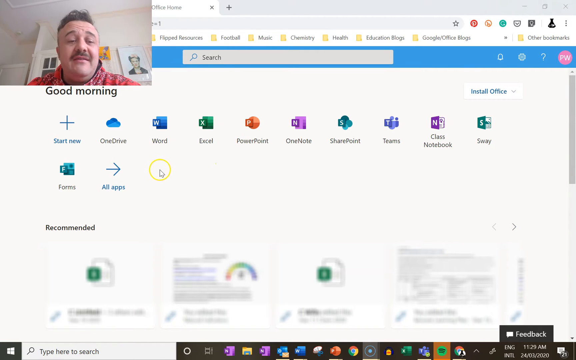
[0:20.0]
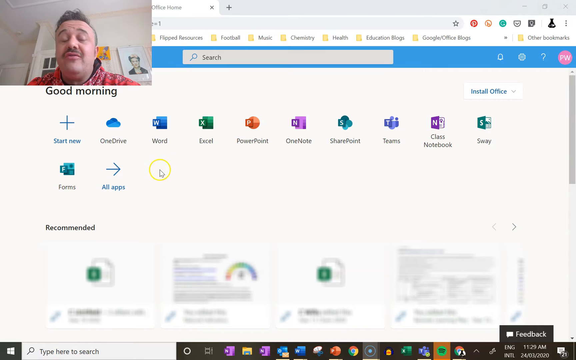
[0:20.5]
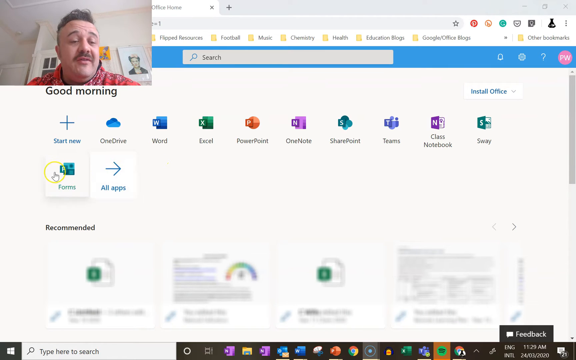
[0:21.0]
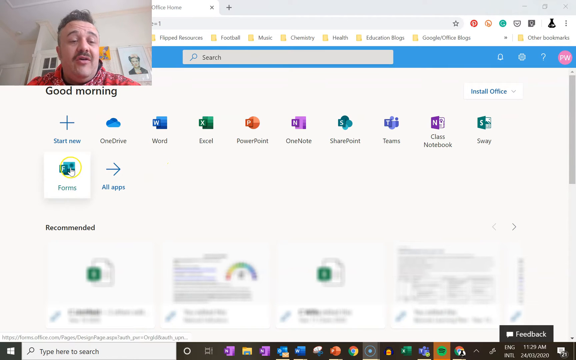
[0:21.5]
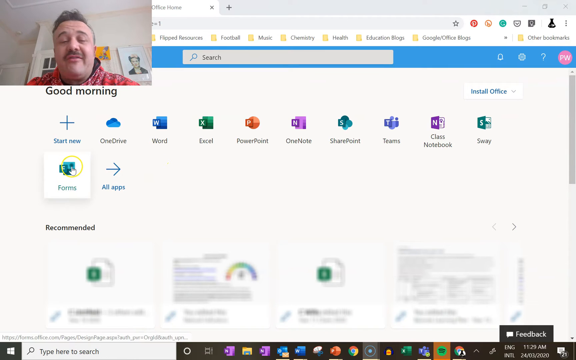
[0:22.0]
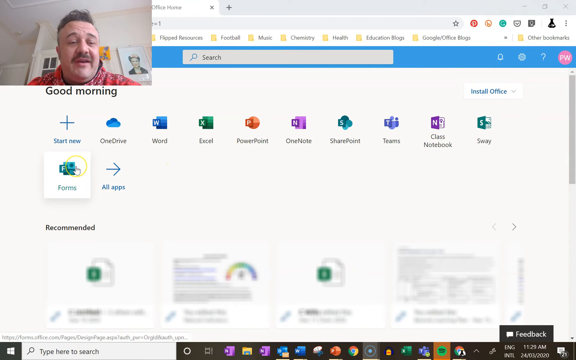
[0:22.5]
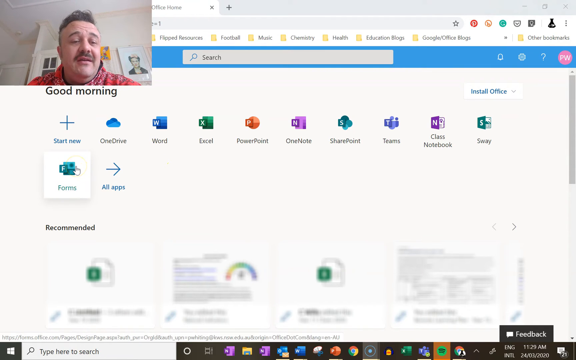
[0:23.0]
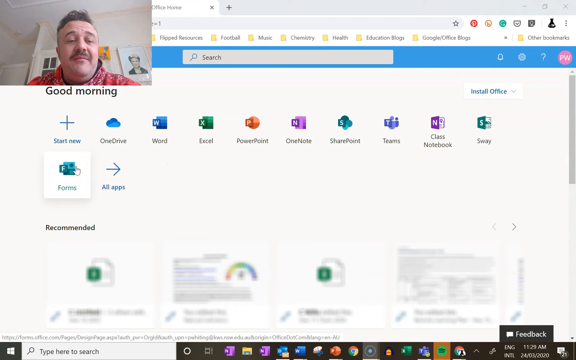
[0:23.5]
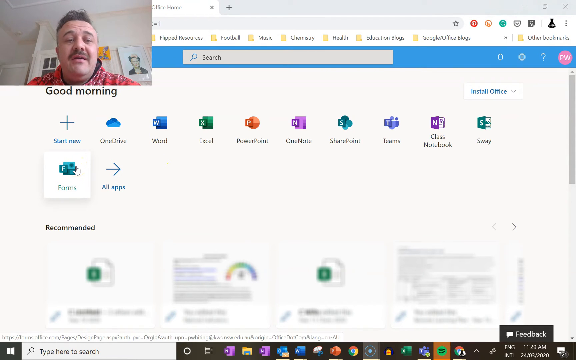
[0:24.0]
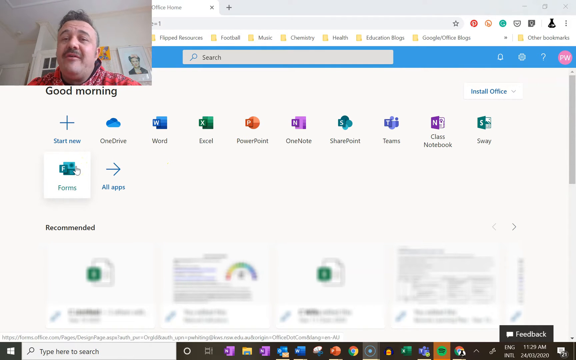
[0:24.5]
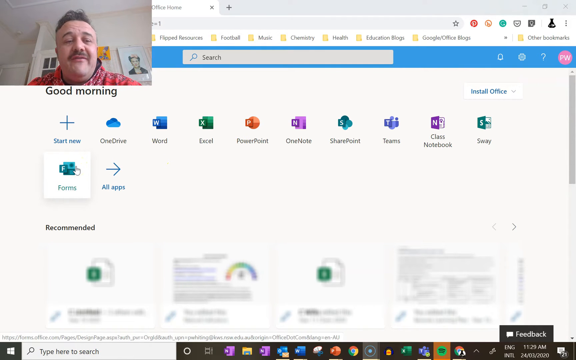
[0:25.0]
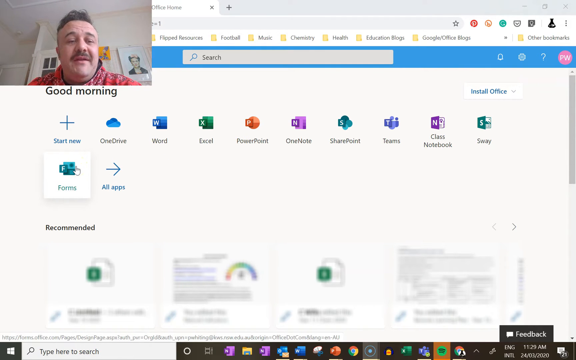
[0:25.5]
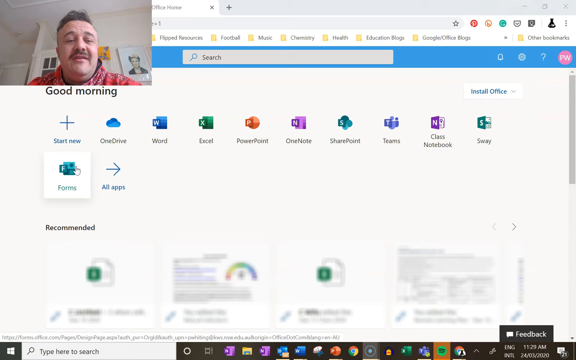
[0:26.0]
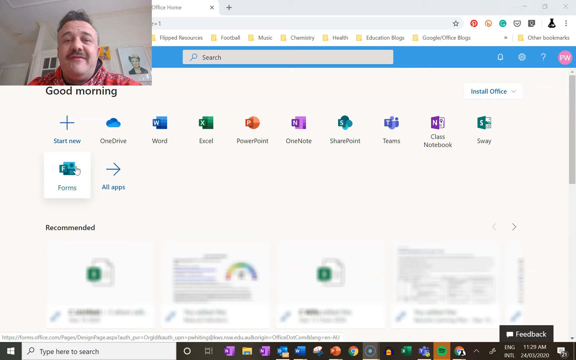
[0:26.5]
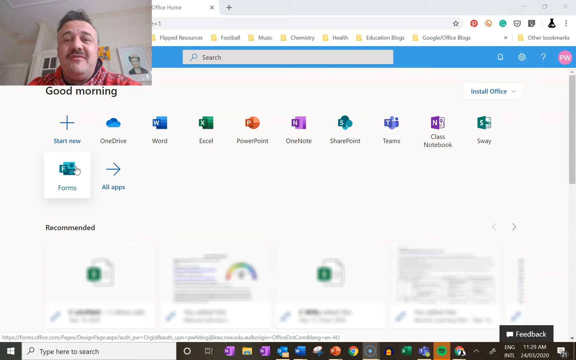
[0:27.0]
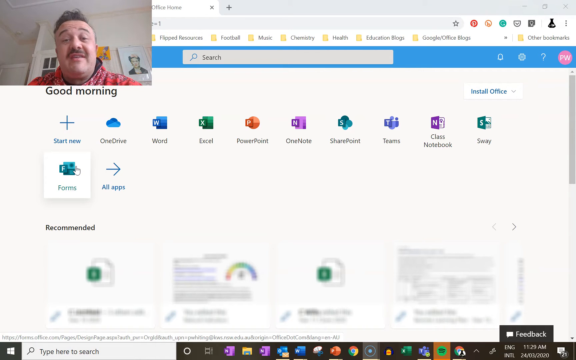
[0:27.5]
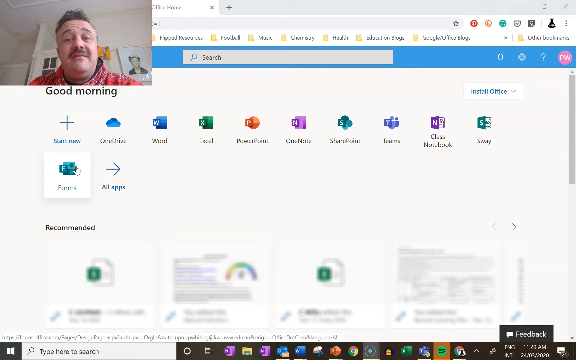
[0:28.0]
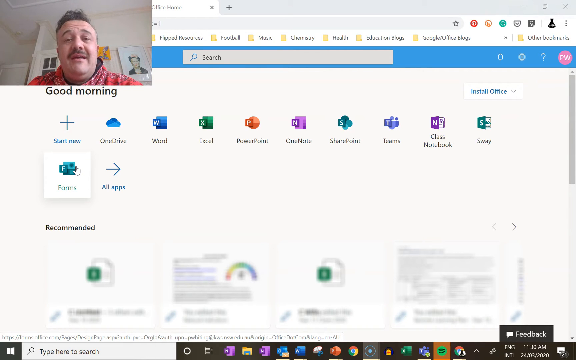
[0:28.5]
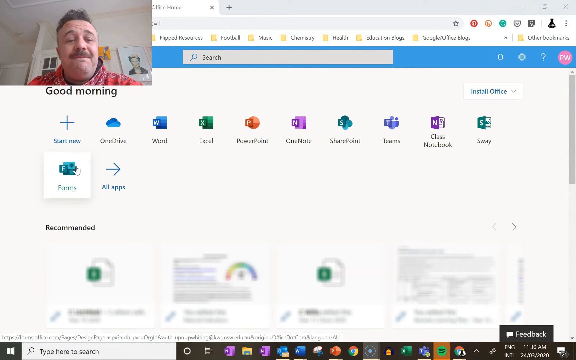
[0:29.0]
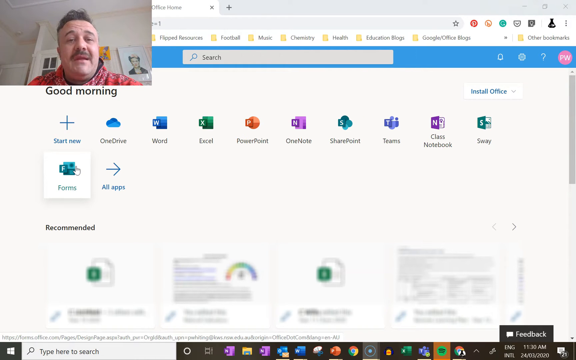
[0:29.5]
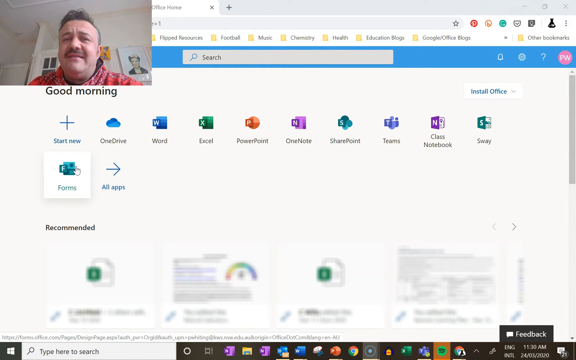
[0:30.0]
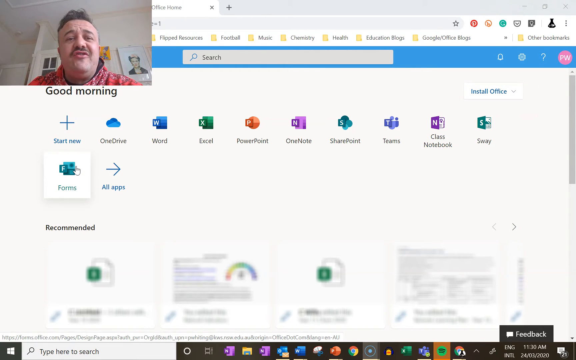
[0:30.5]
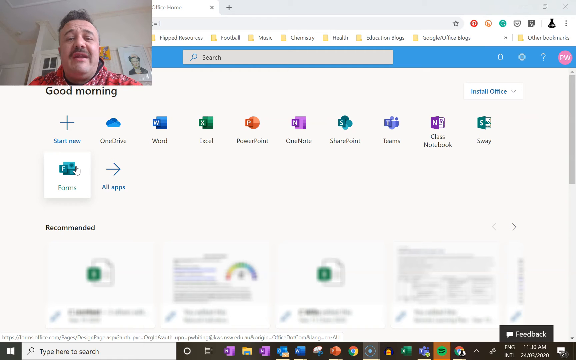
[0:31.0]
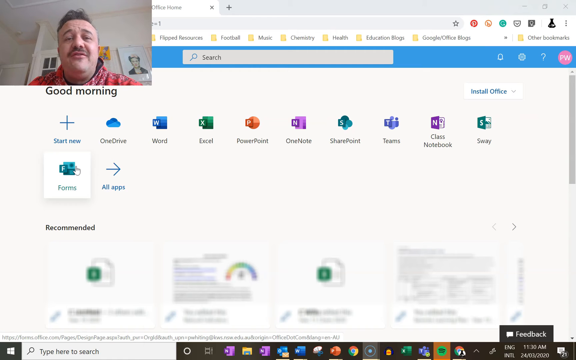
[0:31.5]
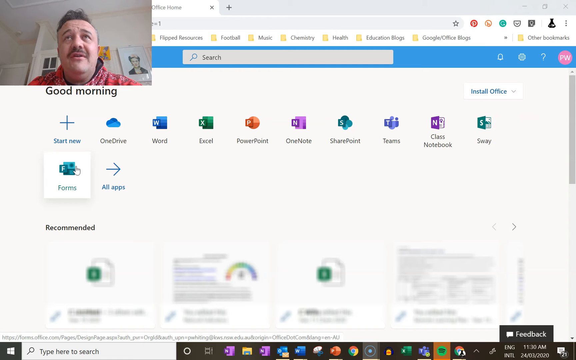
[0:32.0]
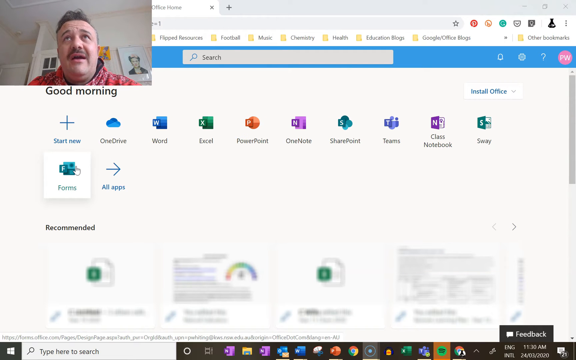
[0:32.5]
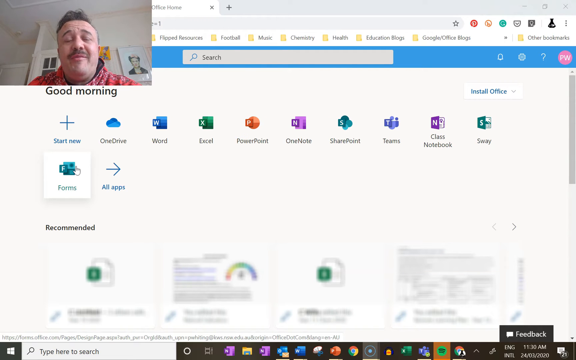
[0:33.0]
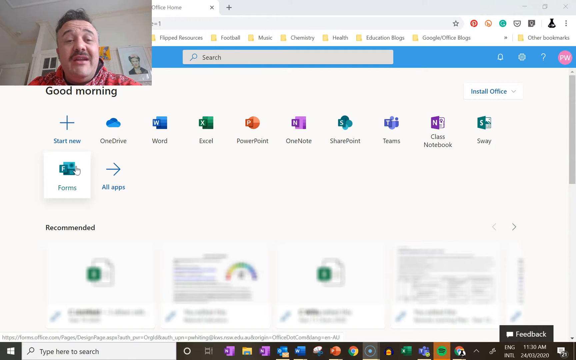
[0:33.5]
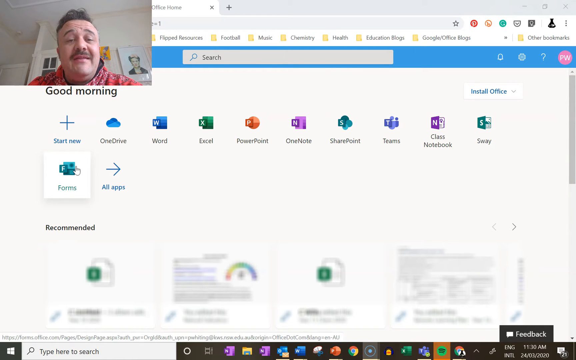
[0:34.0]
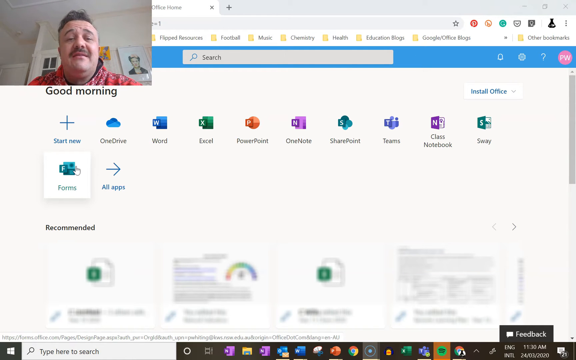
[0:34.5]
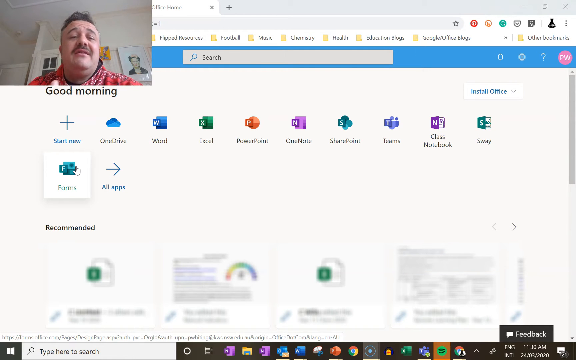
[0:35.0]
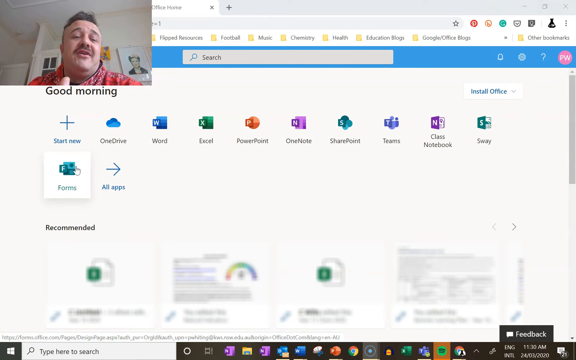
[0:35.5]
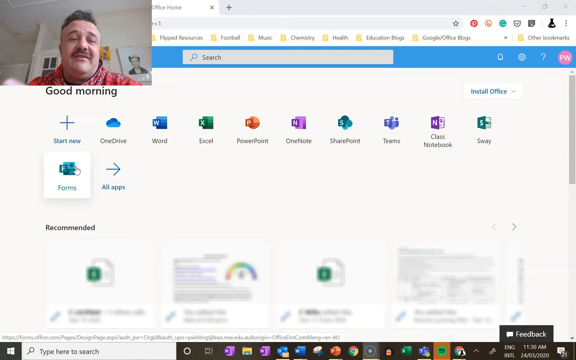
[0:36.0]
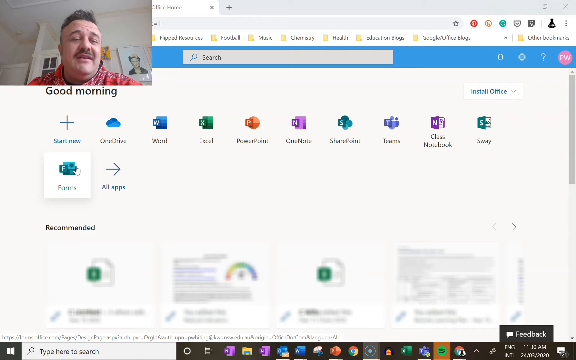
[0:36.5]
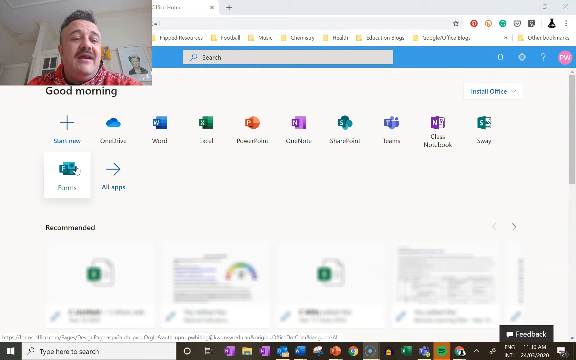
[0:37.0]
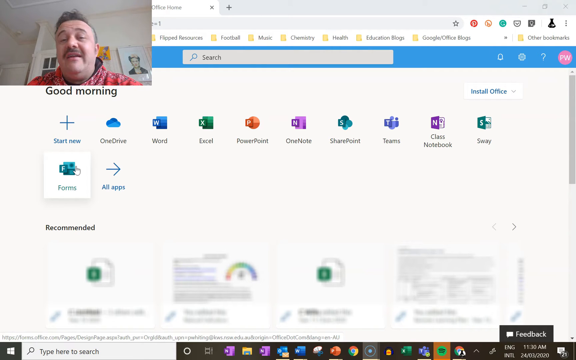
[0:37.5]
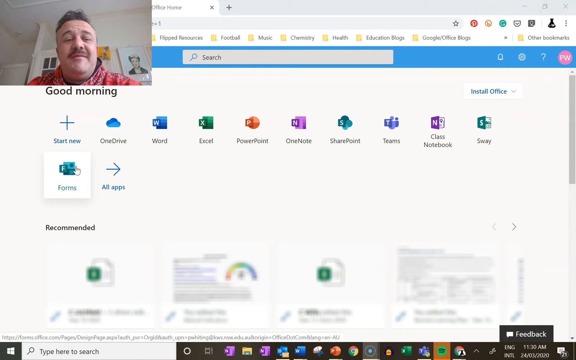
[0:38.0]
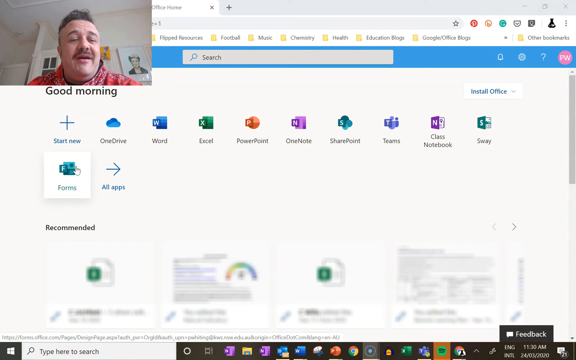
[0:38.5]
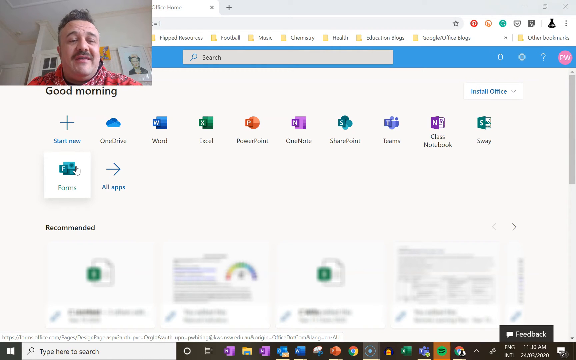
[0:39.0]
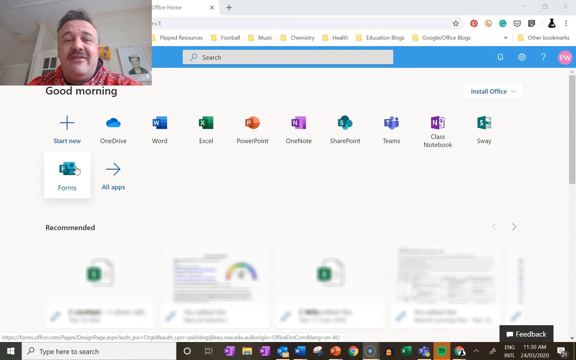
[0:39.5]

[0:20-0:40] A man teaches how to use something on a computer, moving a yellow cursor around the screen while his video sits minimized, quite small, in the upper left corner. Underneath it, in black print, is "good morning". The cursor is a white arrow pointing up inside a white circle lined in yellow. In the lower portion of the screen, the recommended section has four sections that can be clicked. The background is mainly white, with a blue horizontal rectangle across the top portion.